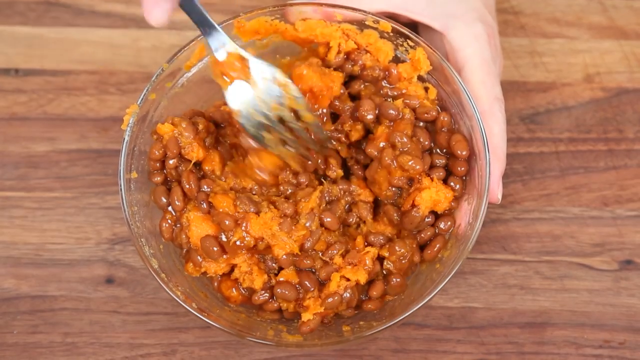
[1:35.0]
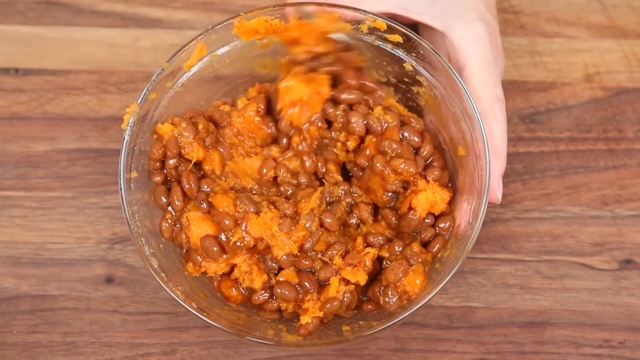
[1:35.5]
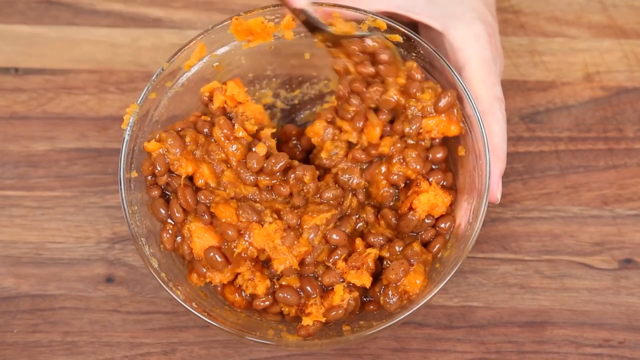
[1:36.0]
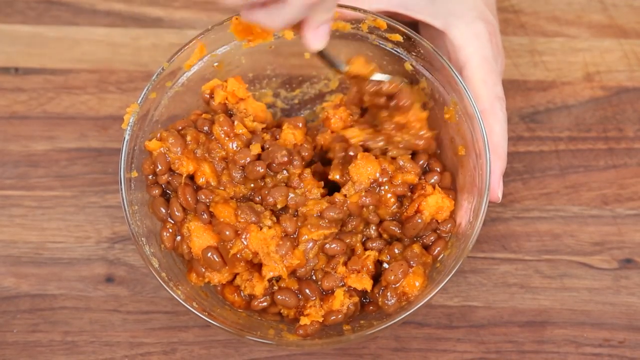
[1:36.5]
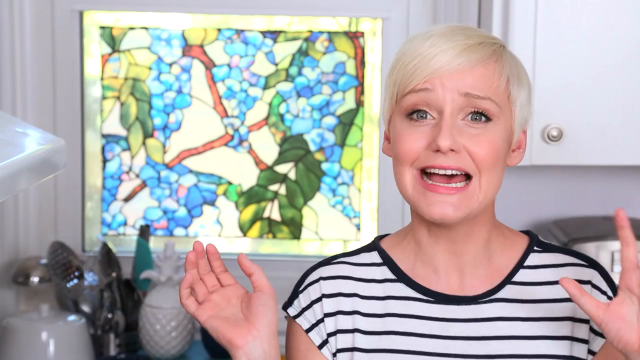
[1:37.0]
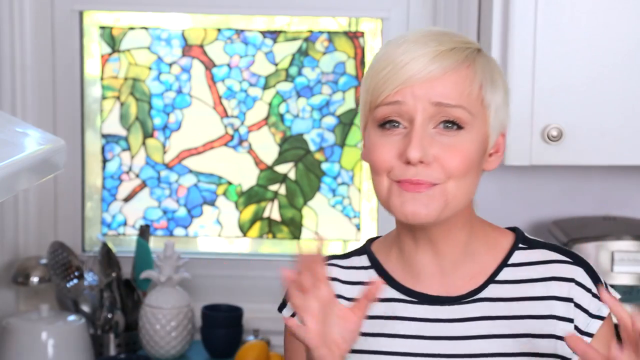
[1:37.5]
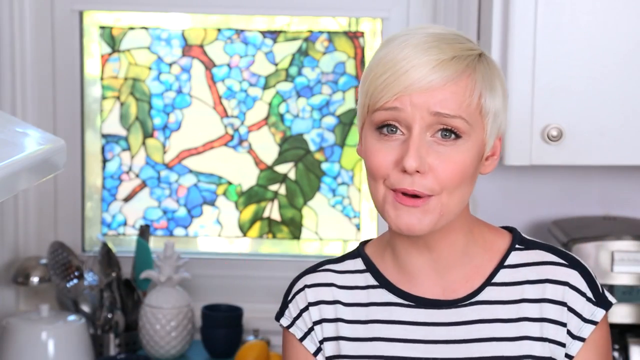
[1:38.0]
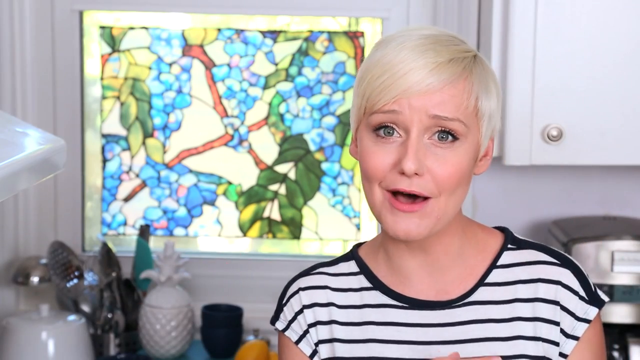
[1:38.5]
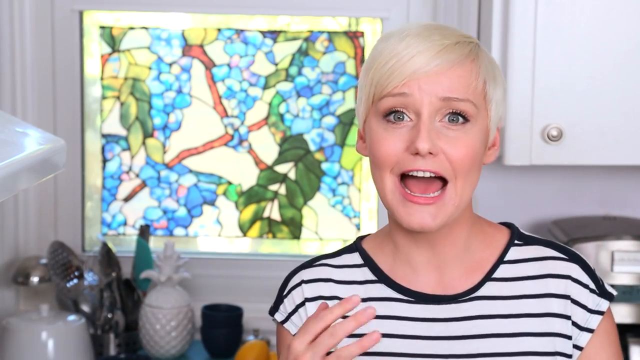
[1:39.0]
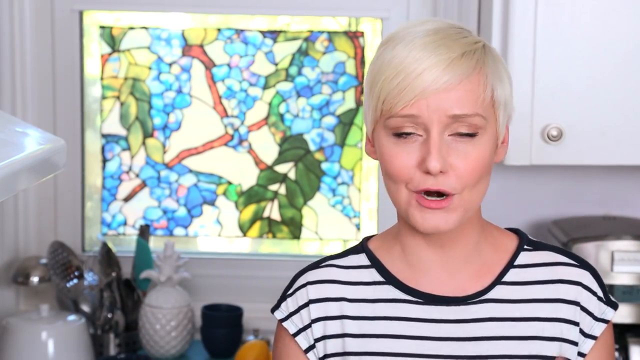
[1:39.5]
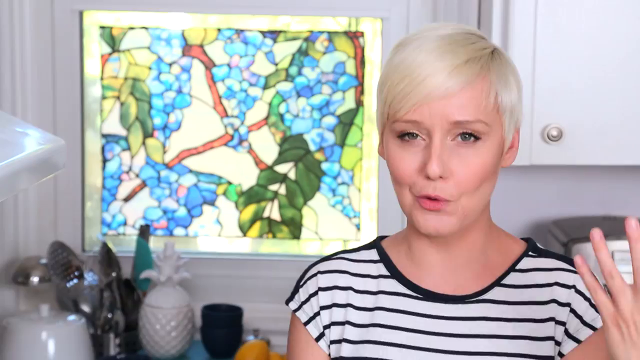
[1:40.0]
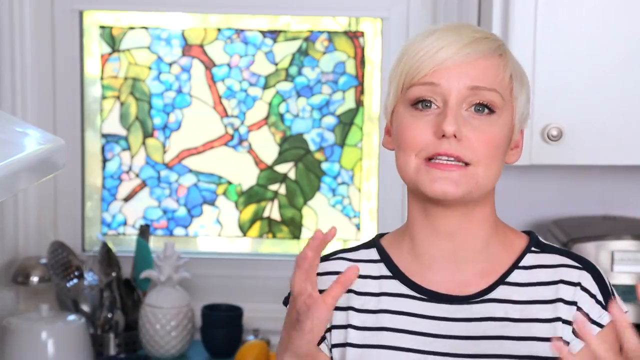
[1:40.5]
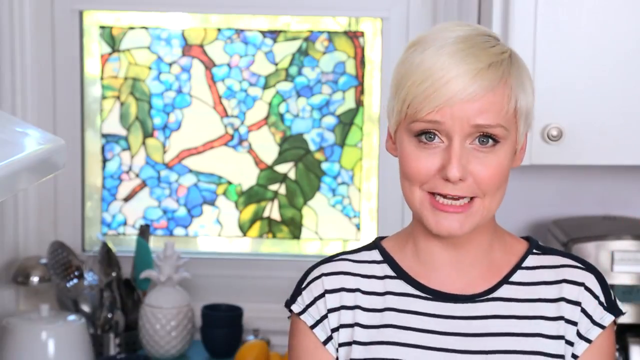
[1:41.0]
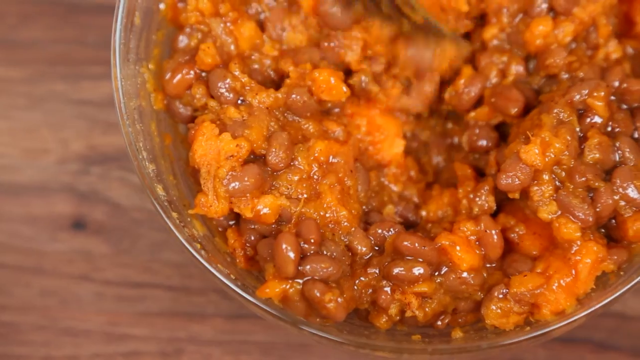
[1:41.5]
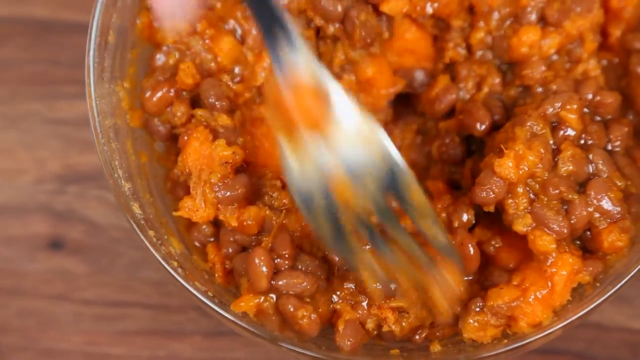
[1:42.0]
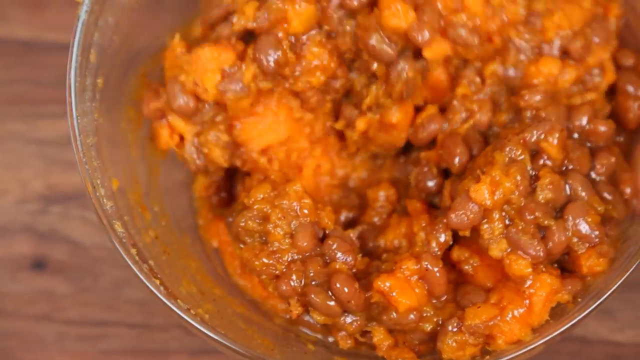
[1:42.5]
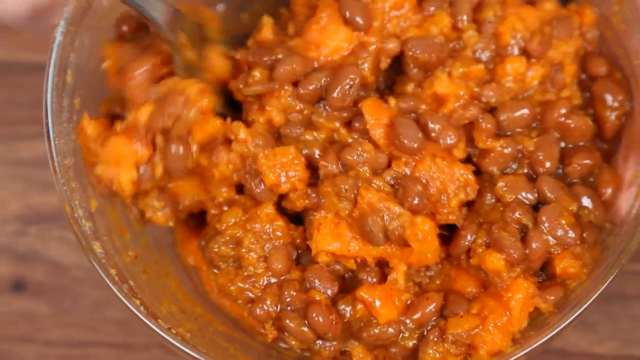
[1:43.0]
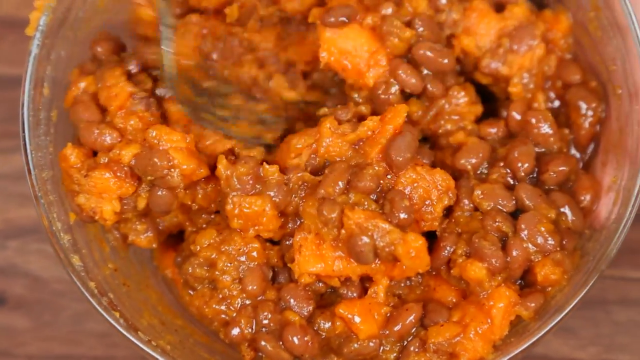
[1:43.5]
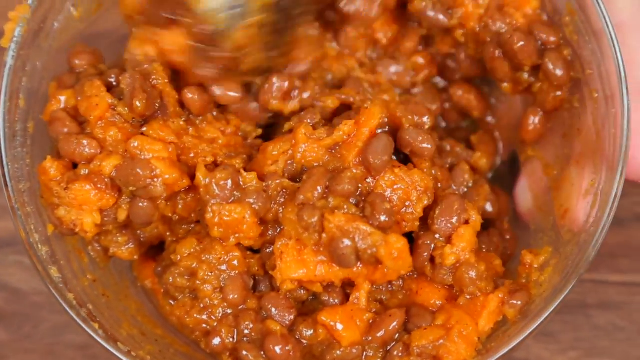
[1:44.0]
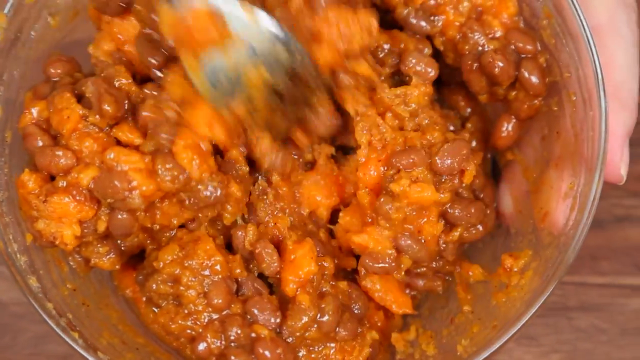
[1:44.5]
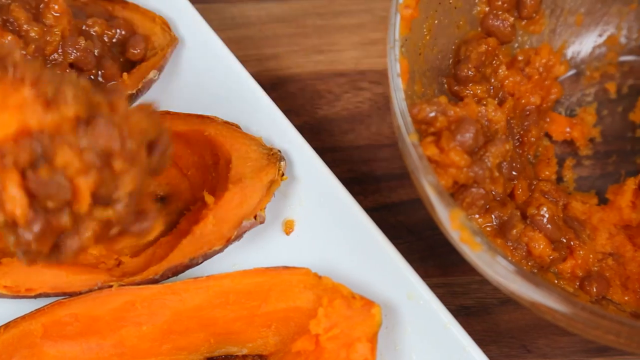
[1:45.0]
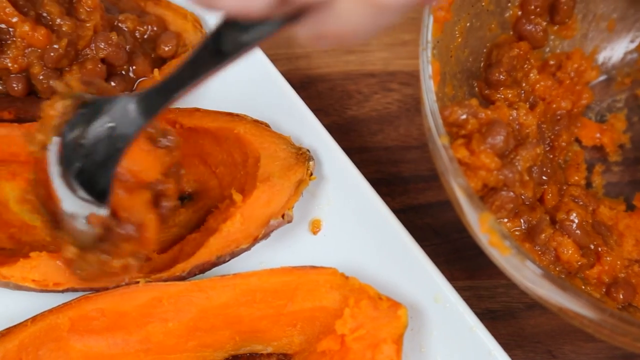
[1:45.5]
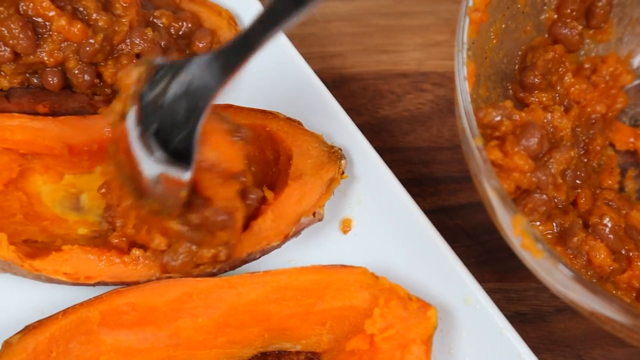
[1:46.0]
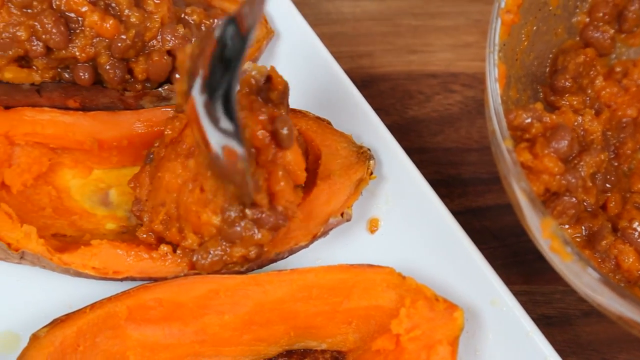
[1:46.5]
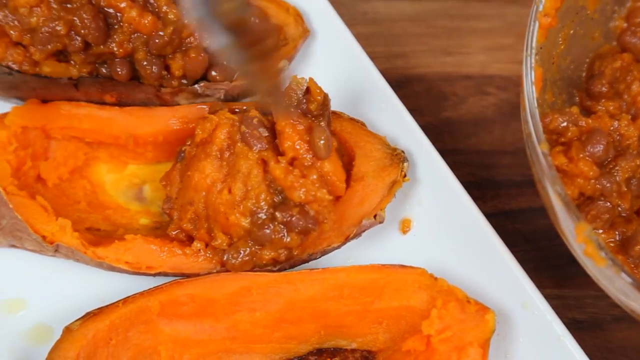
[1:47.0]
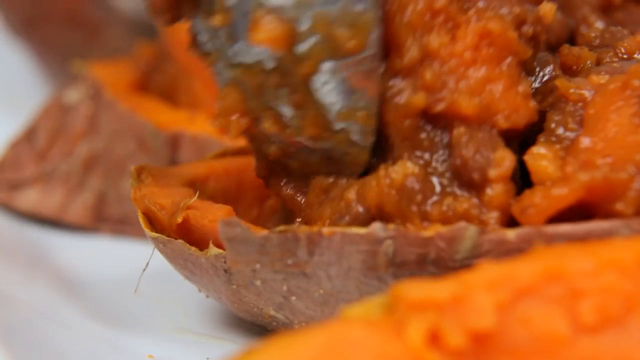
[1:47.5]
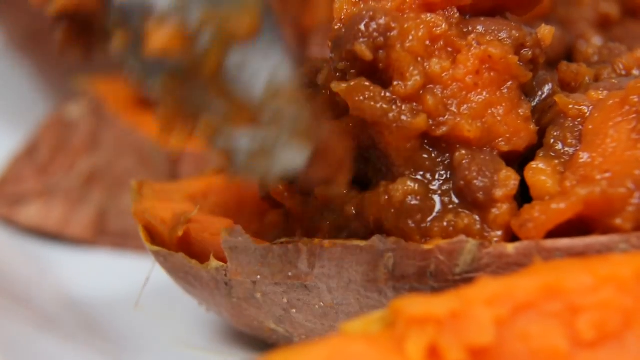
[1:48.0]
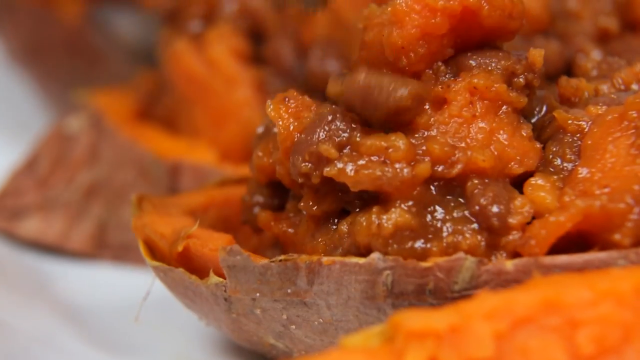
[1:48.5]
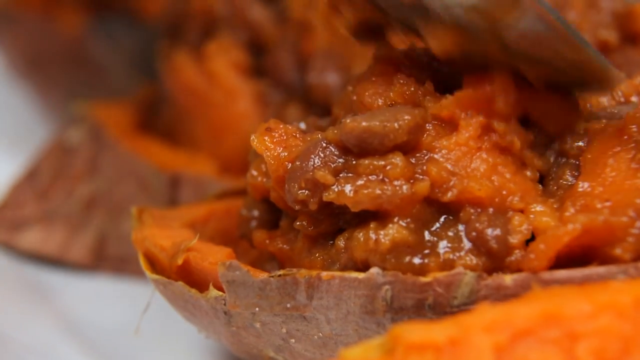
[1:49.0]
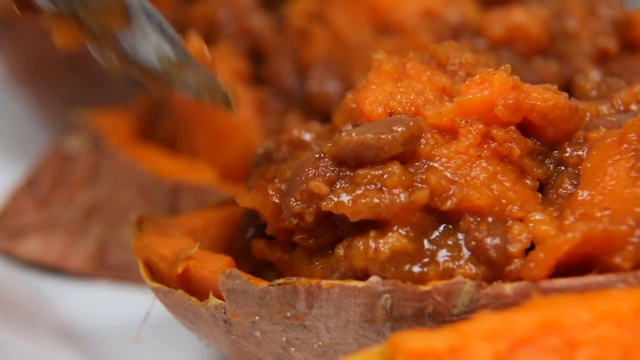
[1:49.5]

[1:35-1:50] On the same brown table, one single big bowl is centered in the middle of the frame, containing brown beans mixed with sweet potato. The woman mixes the contents with a fork in her right hand. It jumps to a scene of her talking: the same woman with short light blonde hair in the white and black striped shirt continues to talk to the camera, being expressive with her hands. It cuts to a close-up of the contents of the bowl. She then uses a spoon to put the mixture of sweet potato and brown beans into the carved-out sweet potato shells, filling them like small bowls.